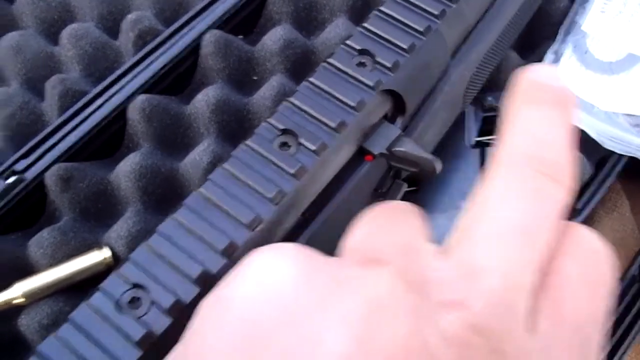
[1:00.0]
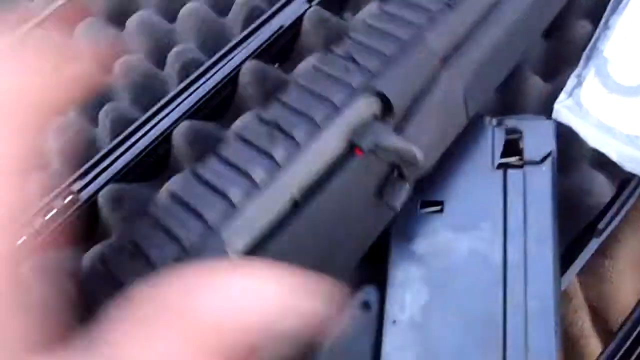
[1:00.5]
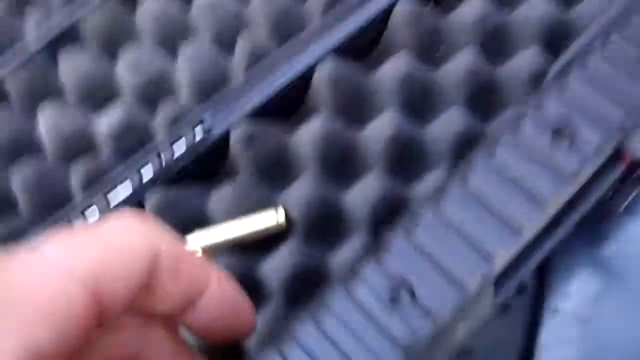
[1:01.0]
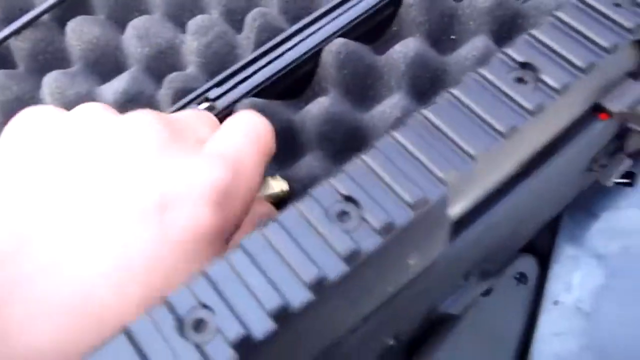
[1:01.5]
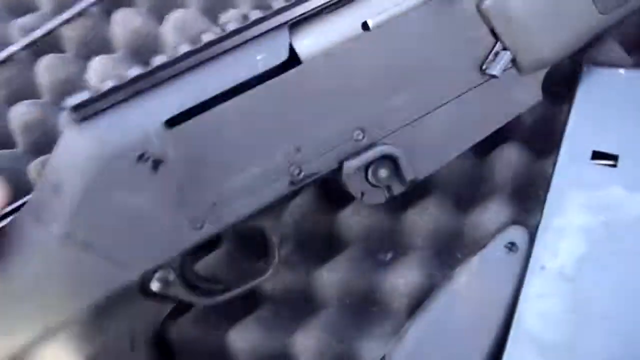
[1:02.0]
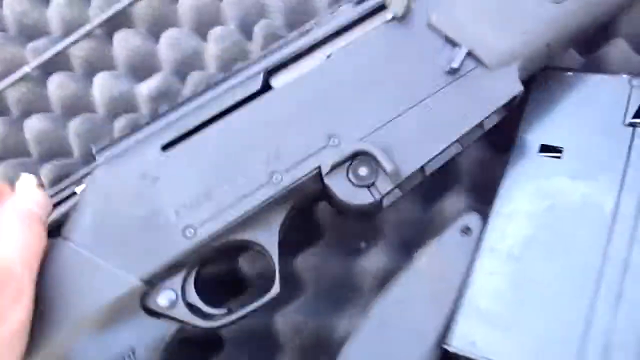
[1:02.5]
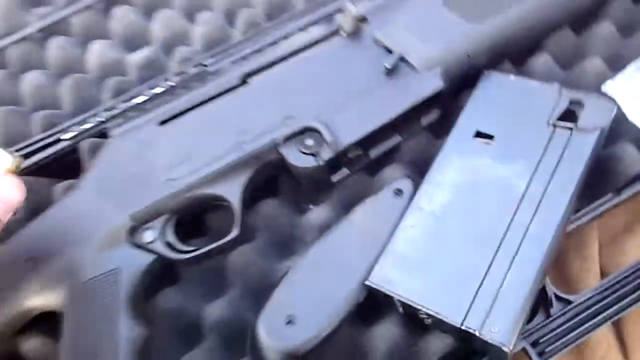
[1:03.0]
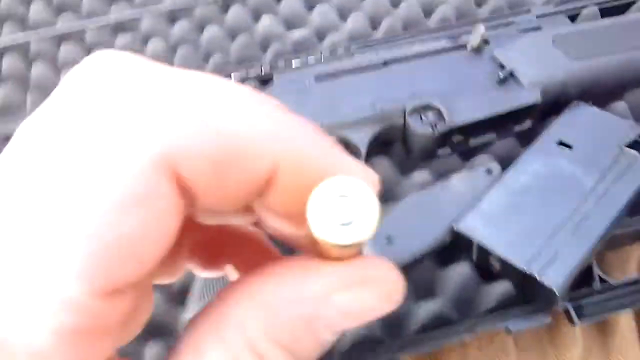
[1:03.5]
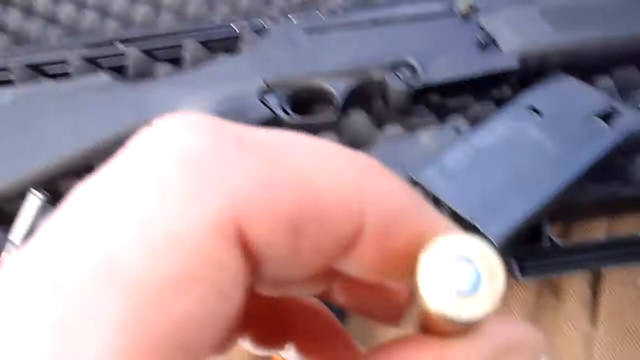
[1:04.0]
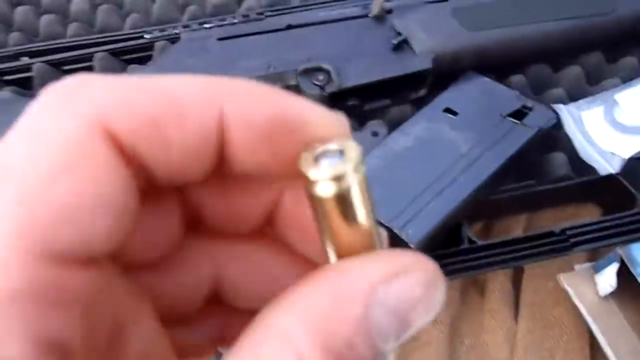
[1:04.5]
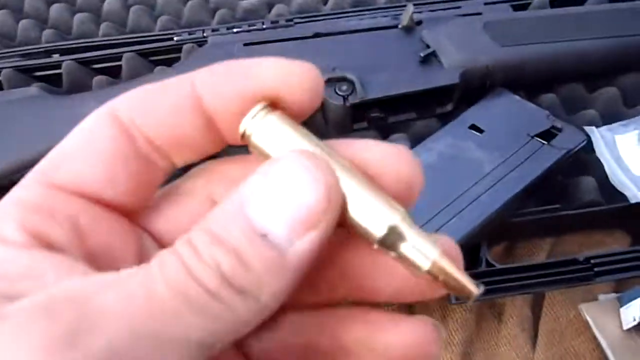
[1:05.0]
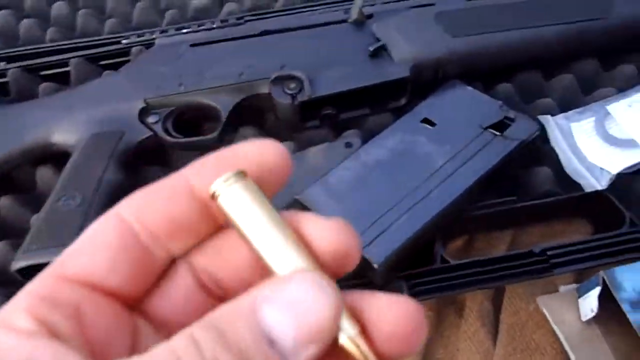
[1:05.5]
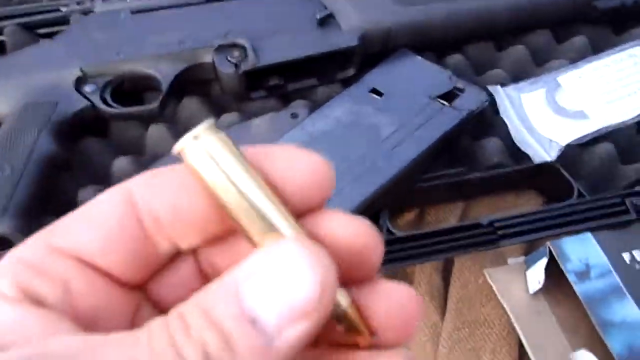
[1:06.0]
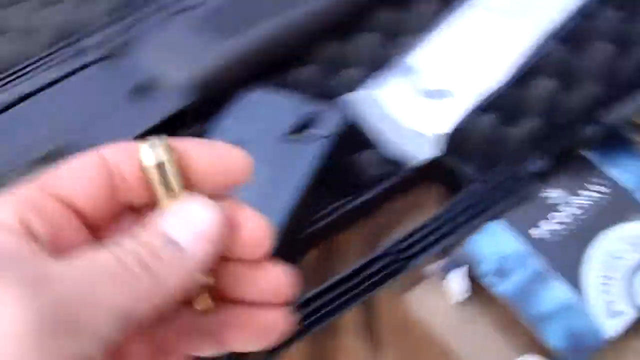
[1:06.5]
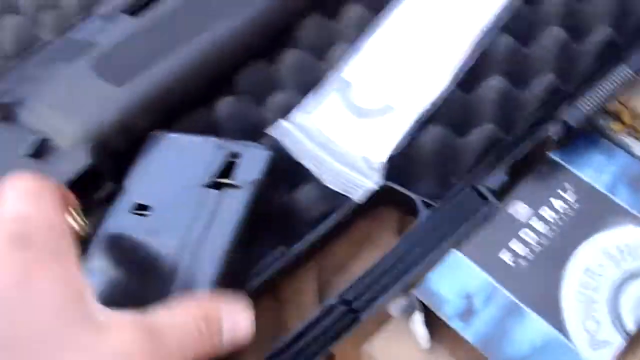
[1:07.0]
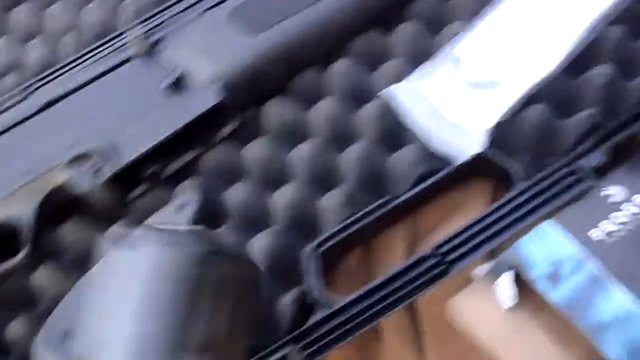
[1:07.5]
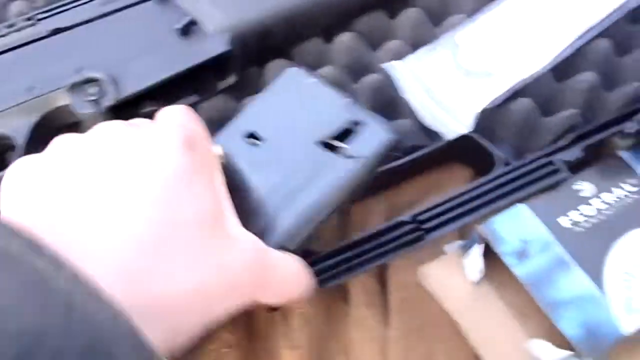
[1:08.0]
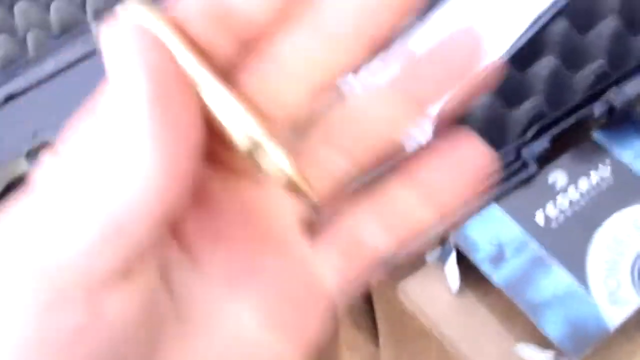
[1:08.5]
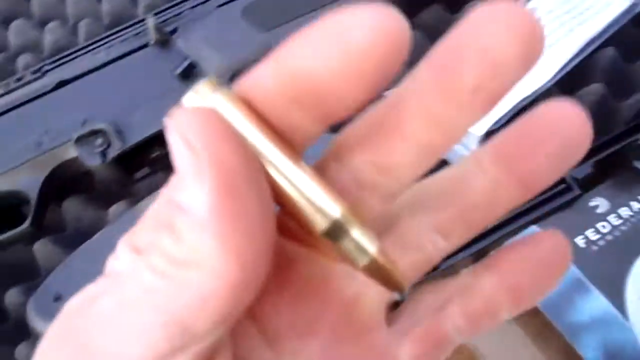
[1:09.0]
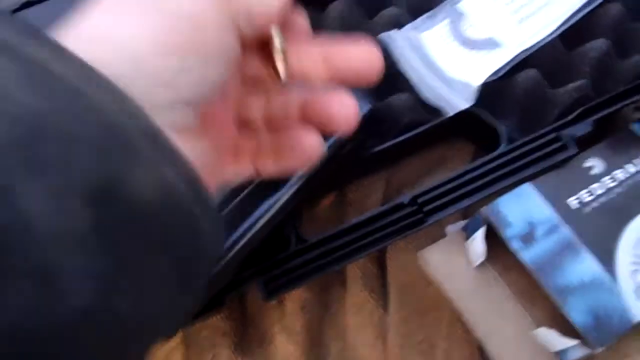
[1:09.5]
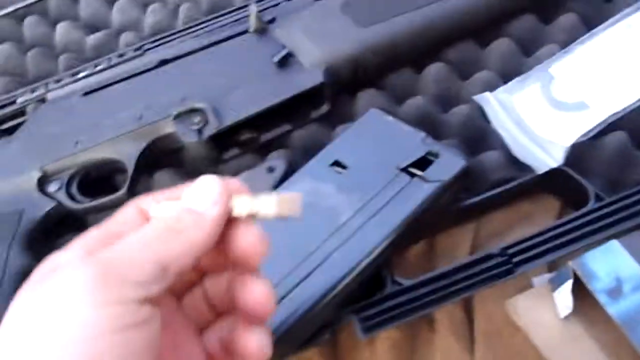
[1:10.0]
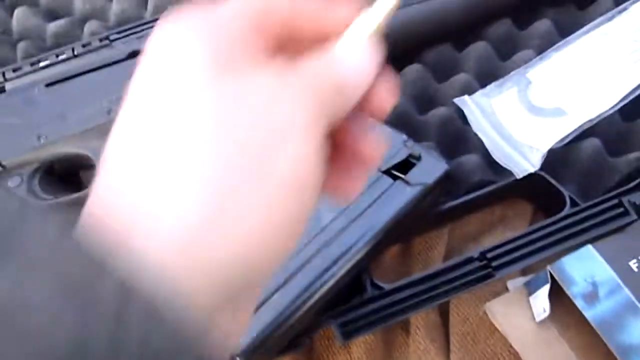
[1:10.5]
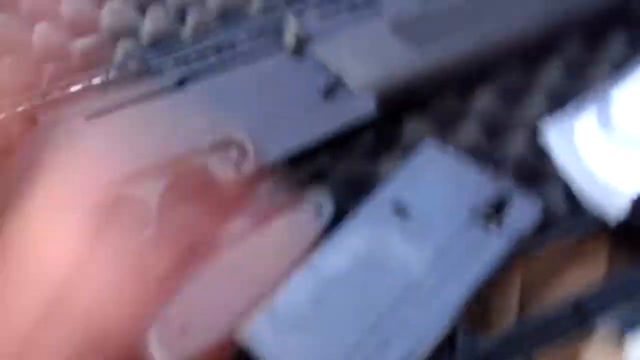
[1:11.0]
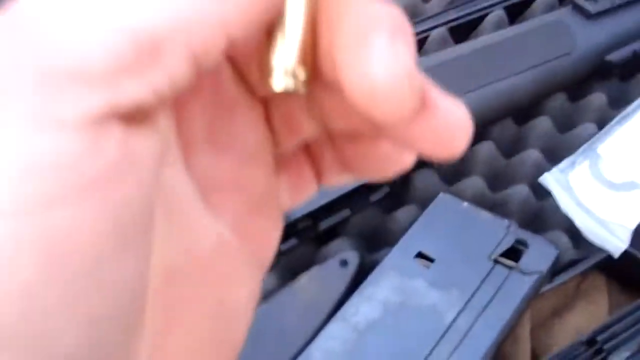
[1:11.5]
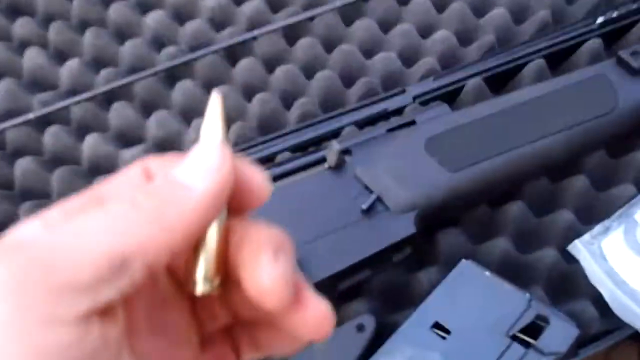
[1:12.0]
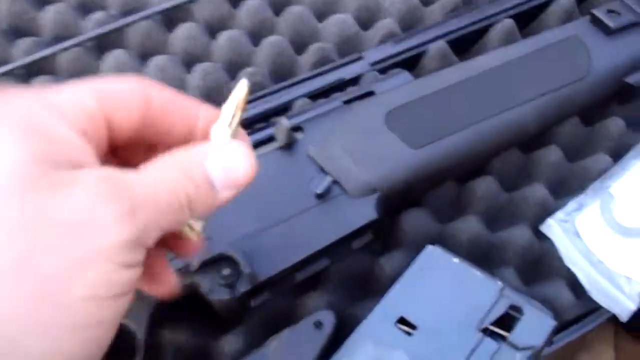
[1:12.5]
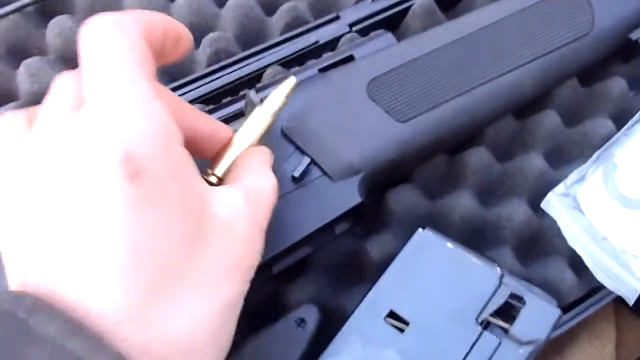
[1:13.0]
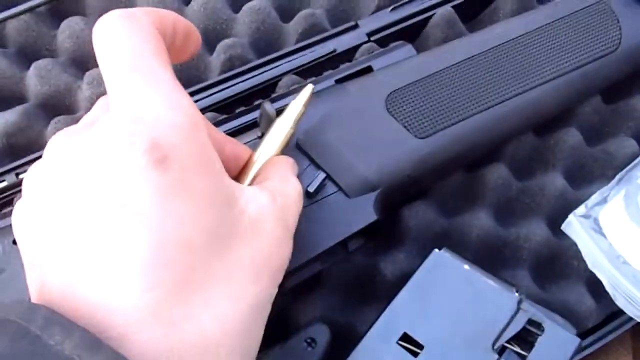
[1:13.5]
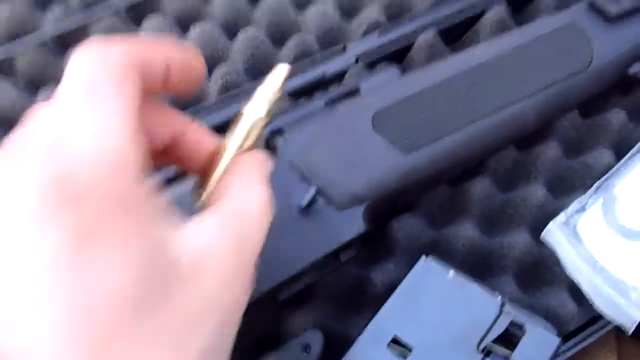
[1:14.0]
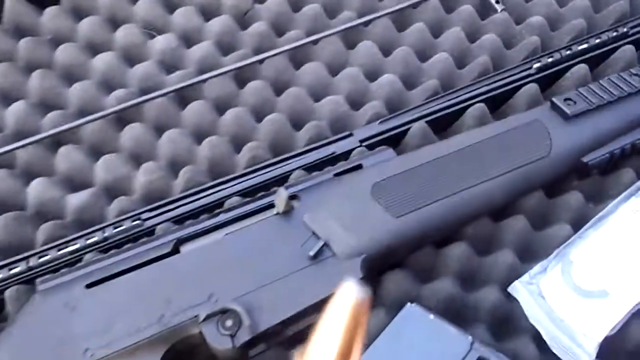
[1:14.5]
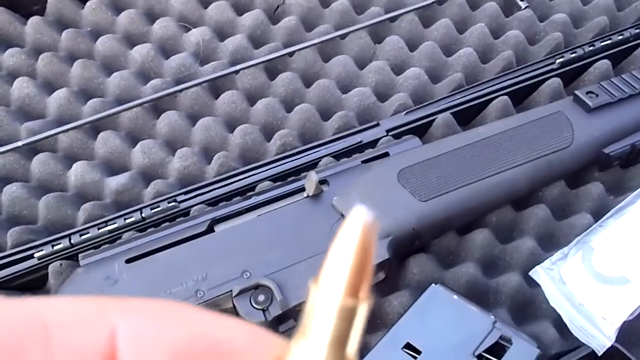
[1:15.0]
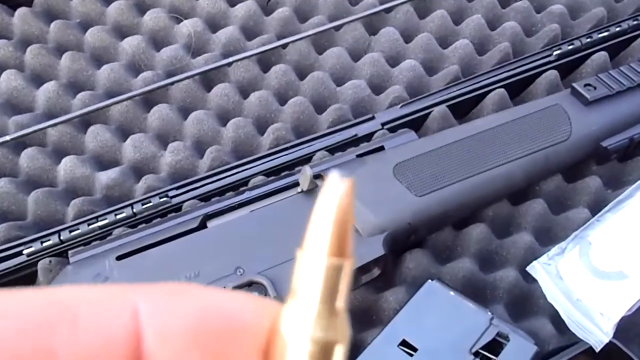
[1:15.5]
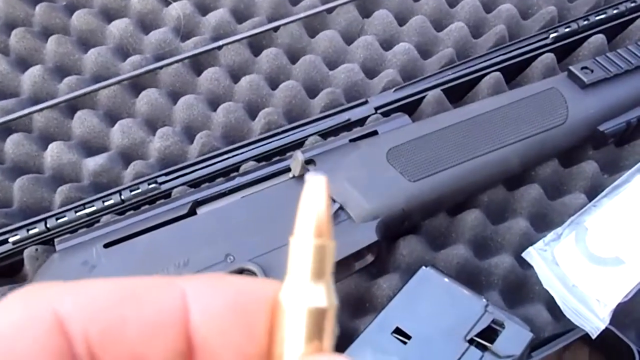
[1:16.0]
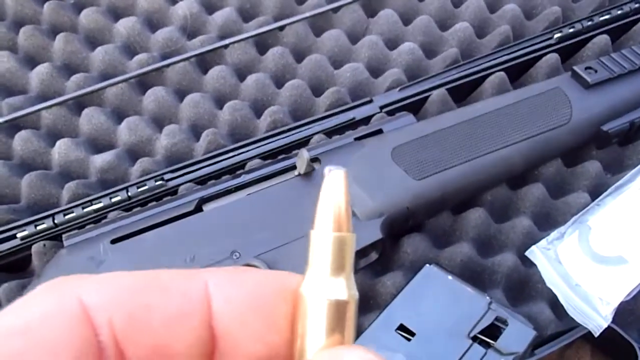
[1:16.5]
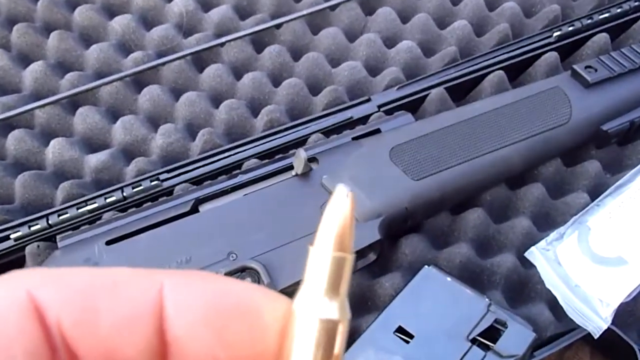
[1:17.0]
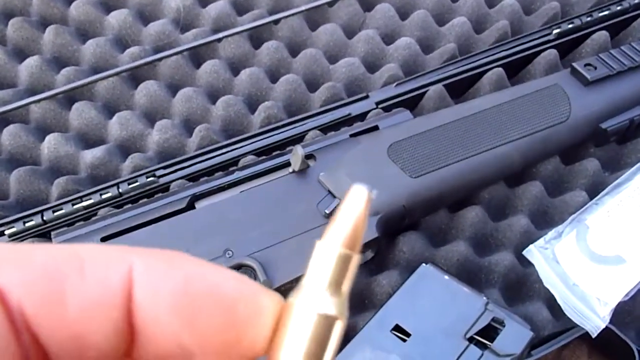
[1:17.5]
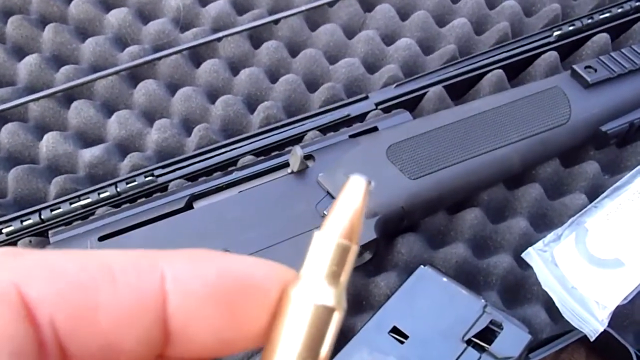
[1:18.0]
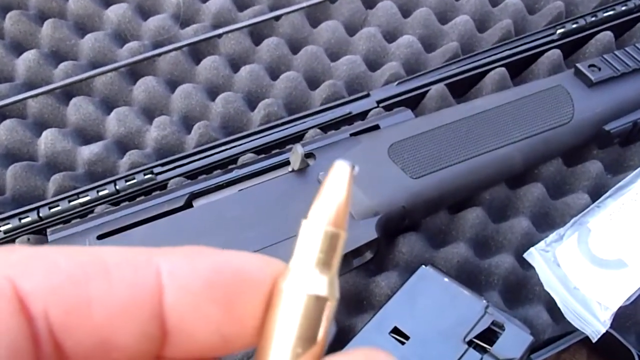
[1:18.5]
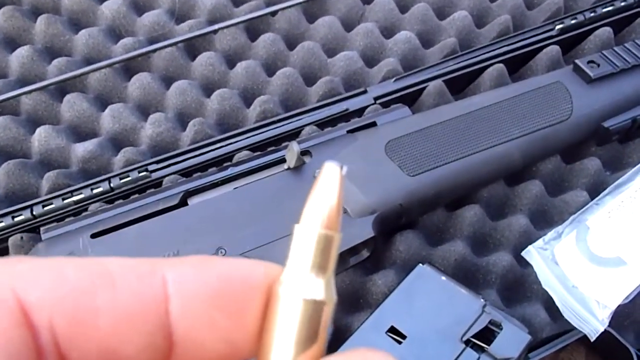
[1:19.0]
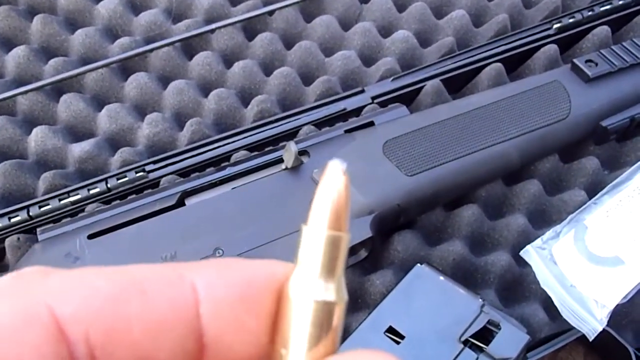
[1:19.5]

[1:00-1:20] Multiple rounds lay next to the gun, which seems to be unloaded. The man picks up a round and shows it off to the camera; it looks like possibly a 7.62. He plays with the round and compares it next to the rifle, holding it next to the firing chamber multiple times, possibly checking whether the ammo fits in the rifle. The weapon is in the case, untouched, and seems to be unloaded.